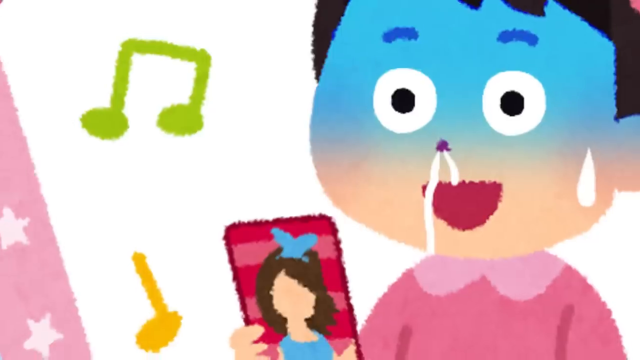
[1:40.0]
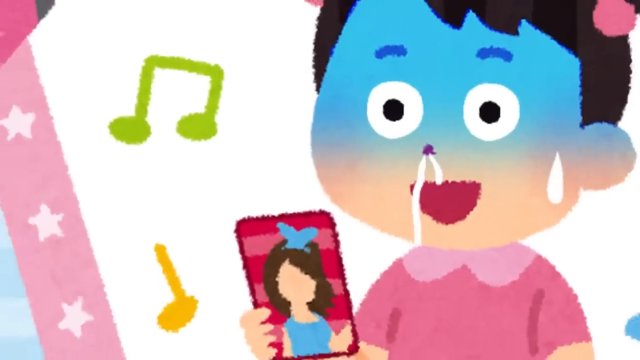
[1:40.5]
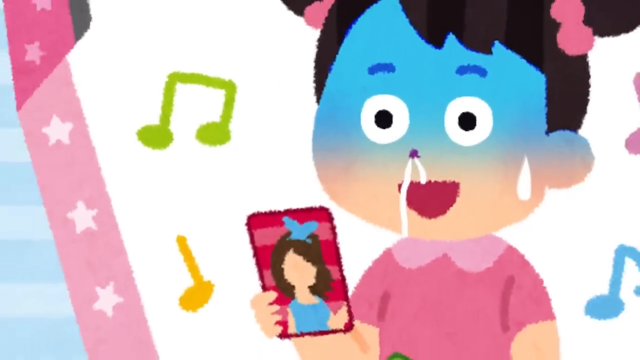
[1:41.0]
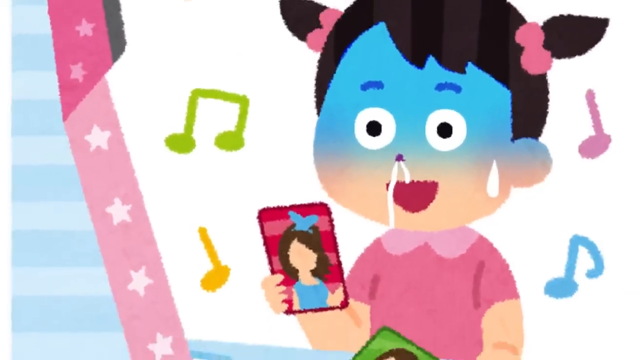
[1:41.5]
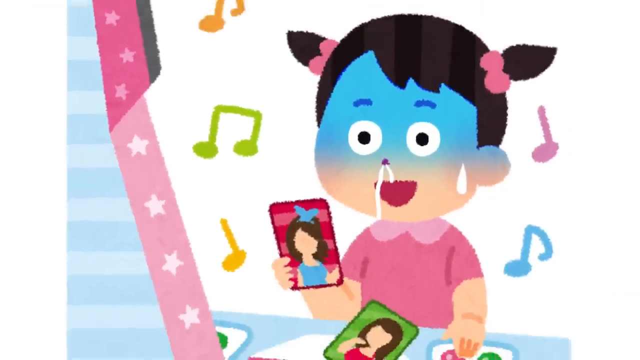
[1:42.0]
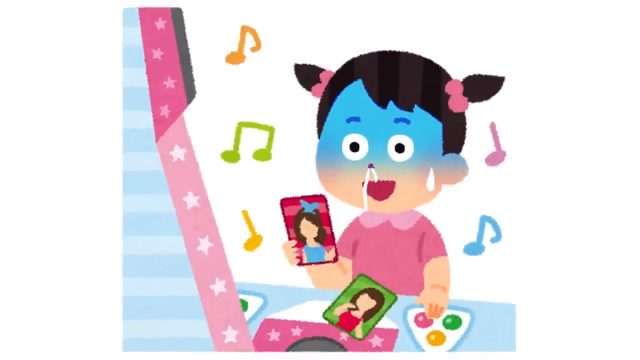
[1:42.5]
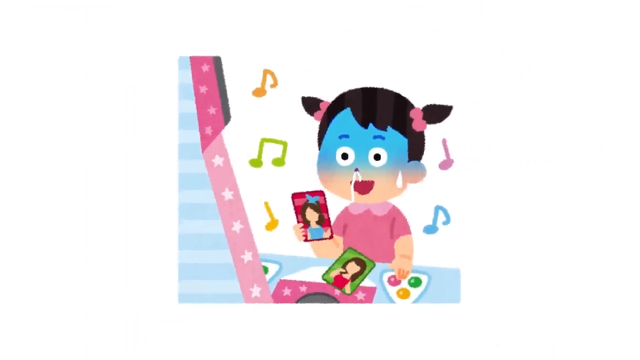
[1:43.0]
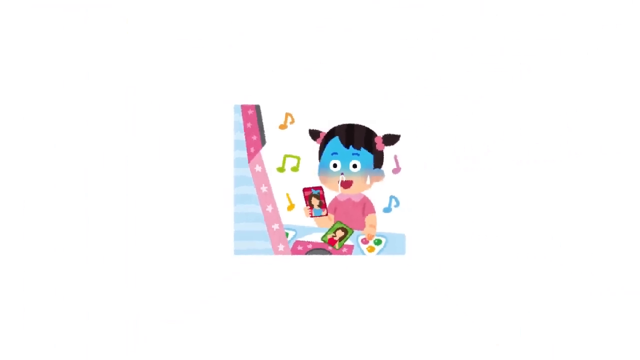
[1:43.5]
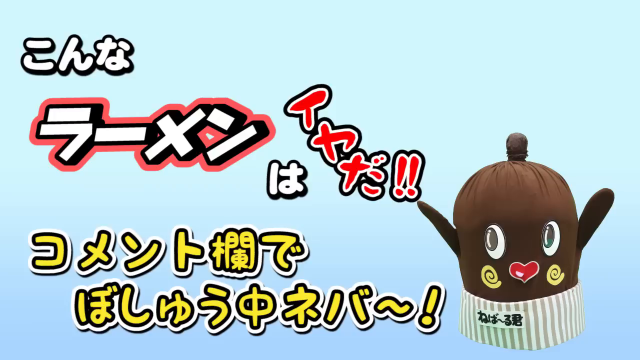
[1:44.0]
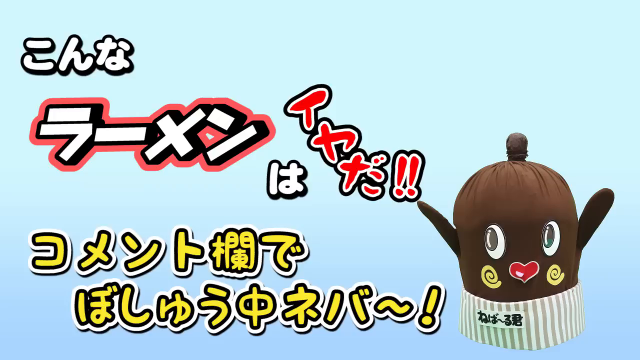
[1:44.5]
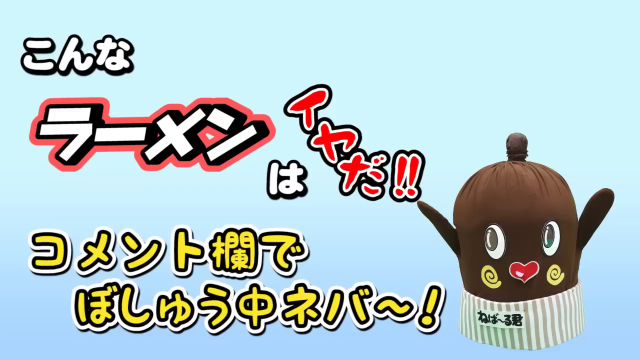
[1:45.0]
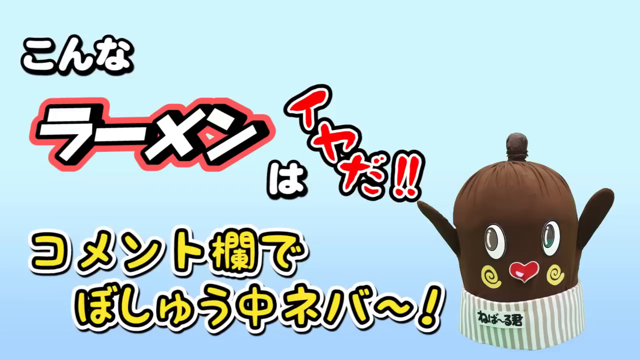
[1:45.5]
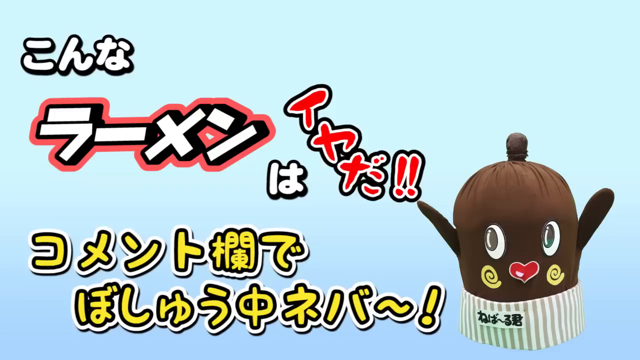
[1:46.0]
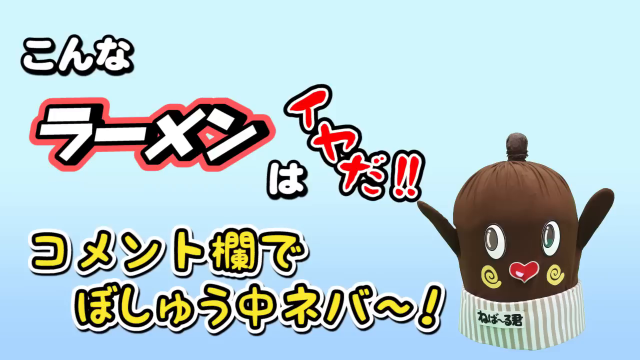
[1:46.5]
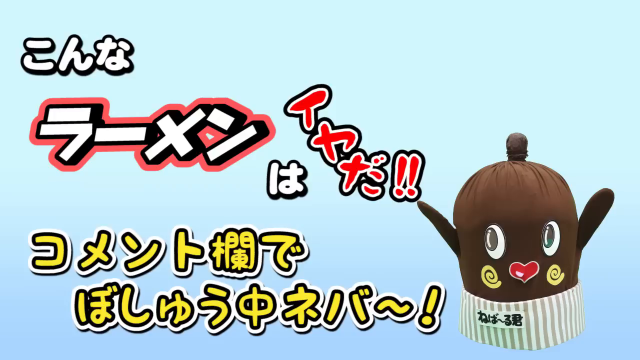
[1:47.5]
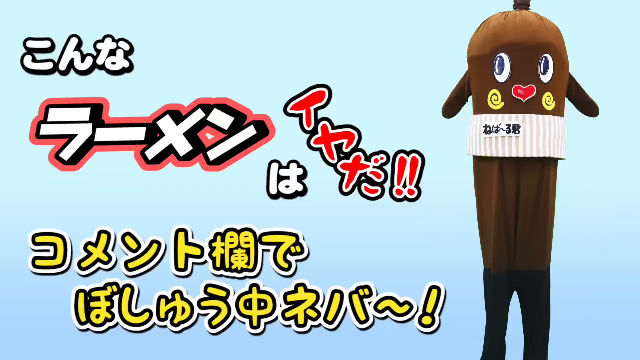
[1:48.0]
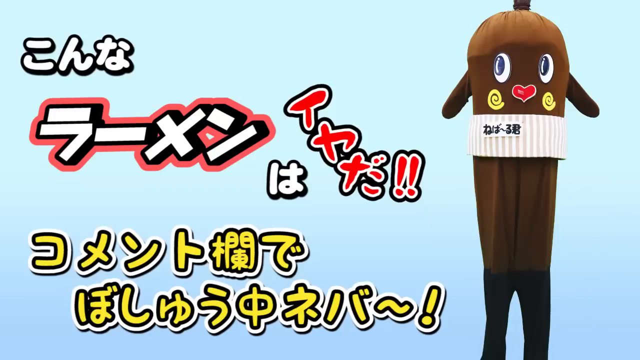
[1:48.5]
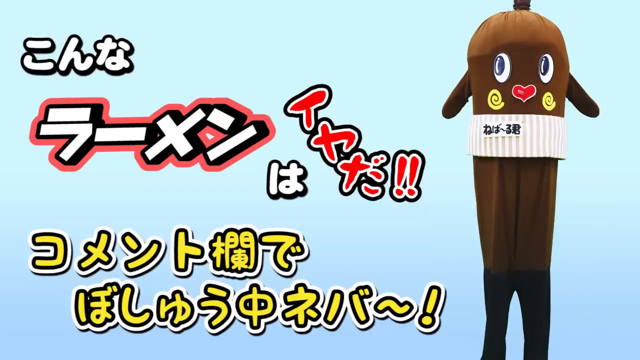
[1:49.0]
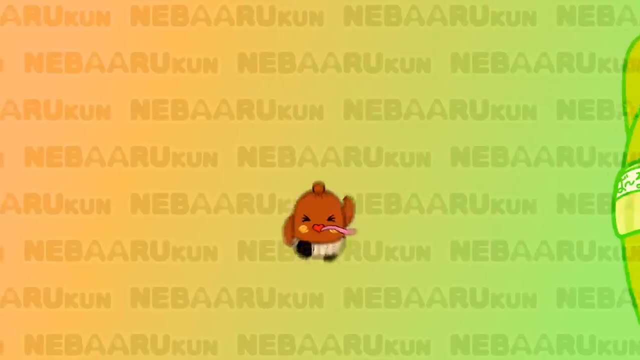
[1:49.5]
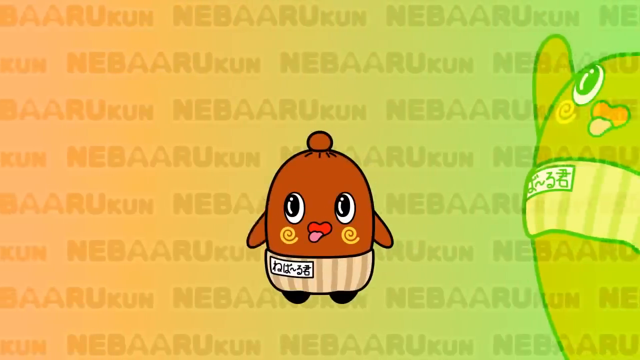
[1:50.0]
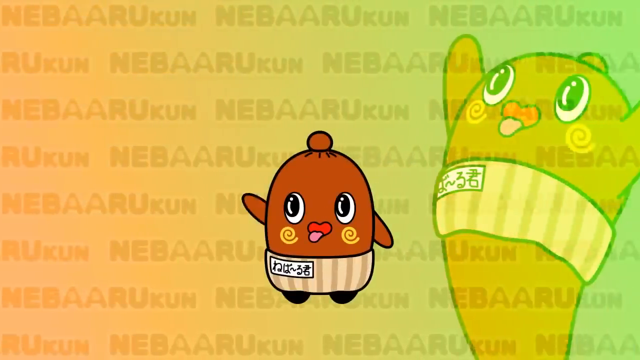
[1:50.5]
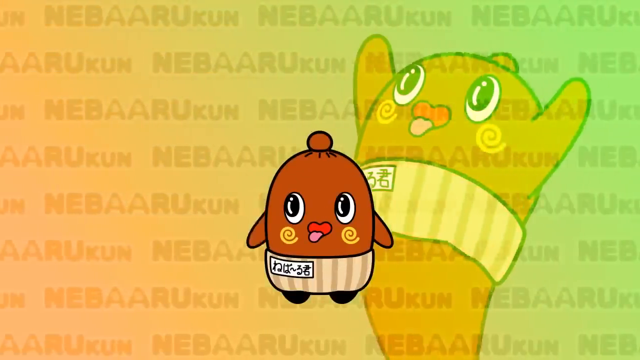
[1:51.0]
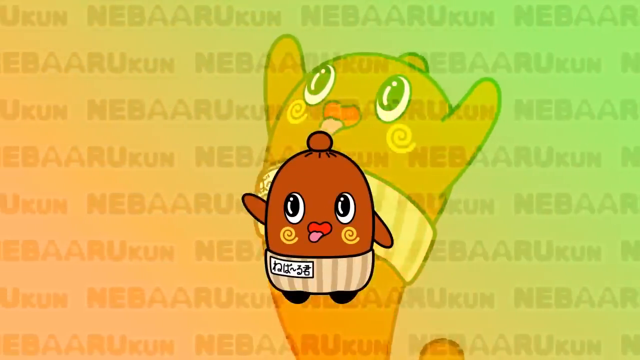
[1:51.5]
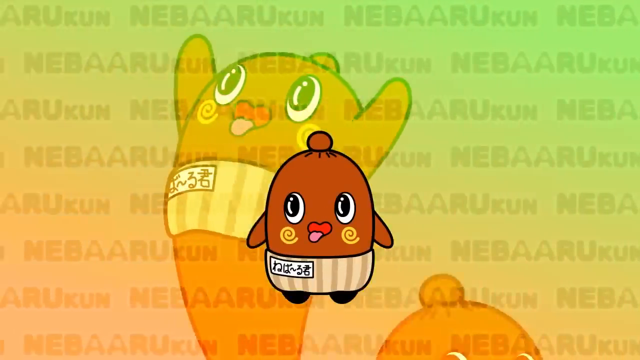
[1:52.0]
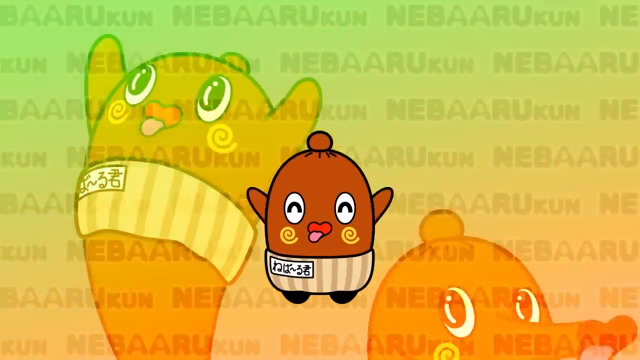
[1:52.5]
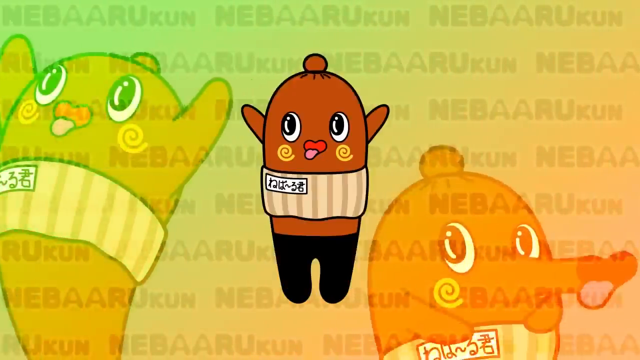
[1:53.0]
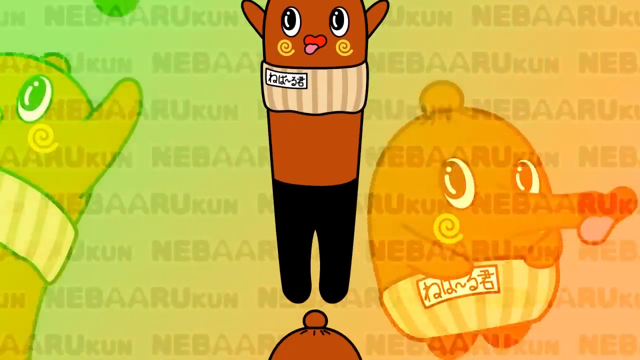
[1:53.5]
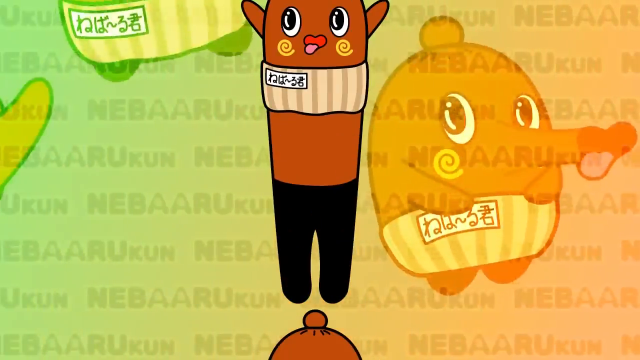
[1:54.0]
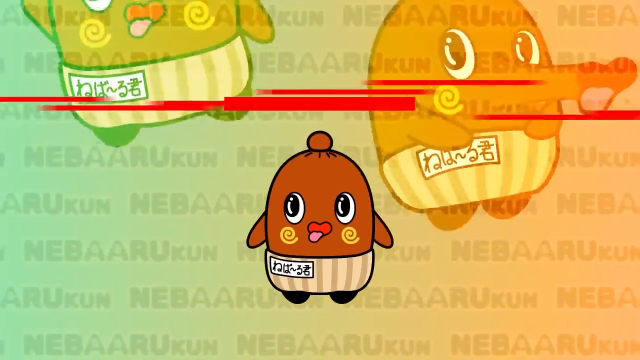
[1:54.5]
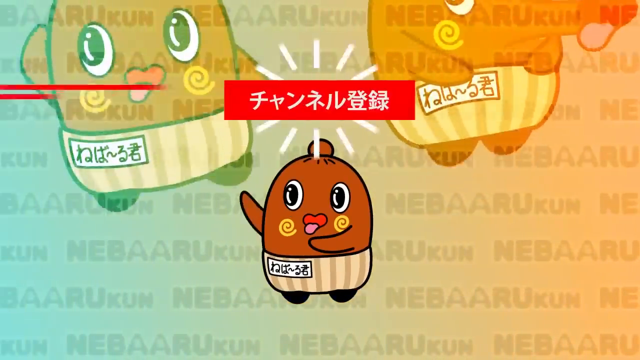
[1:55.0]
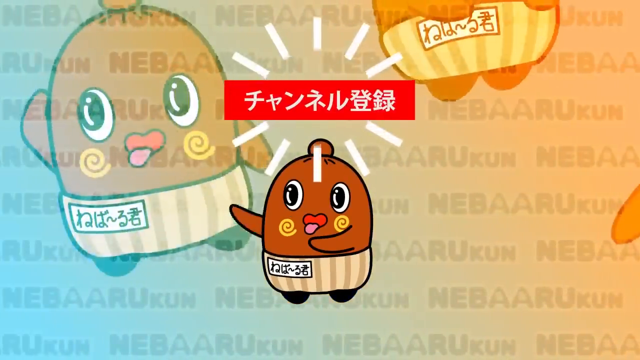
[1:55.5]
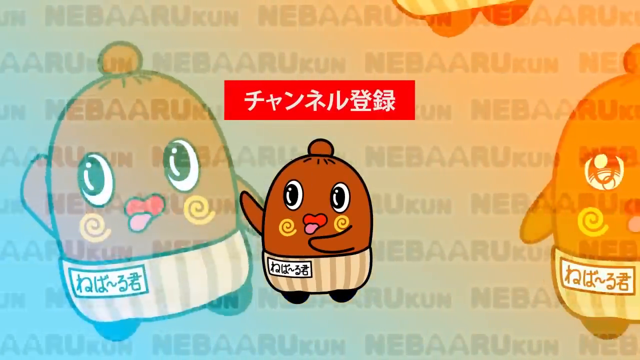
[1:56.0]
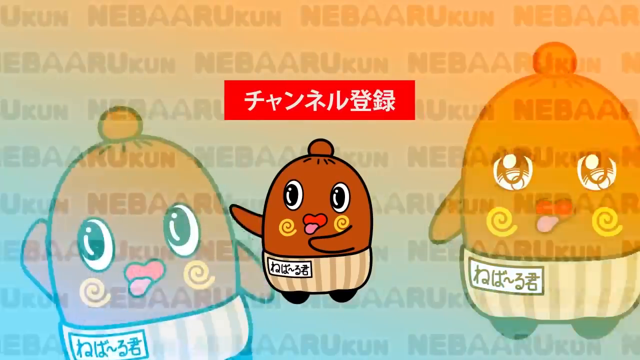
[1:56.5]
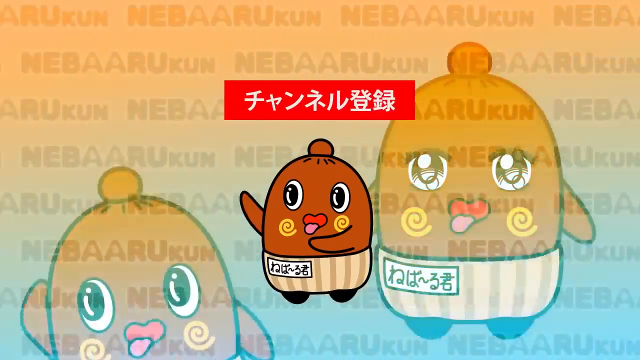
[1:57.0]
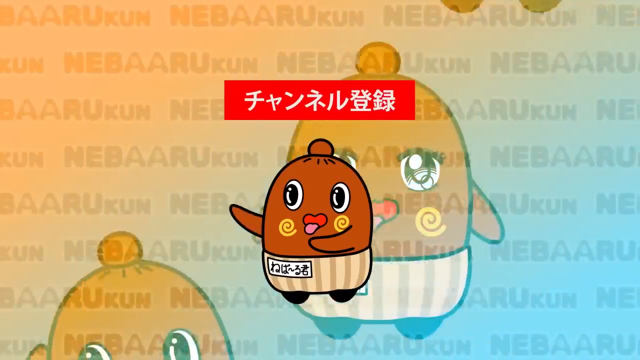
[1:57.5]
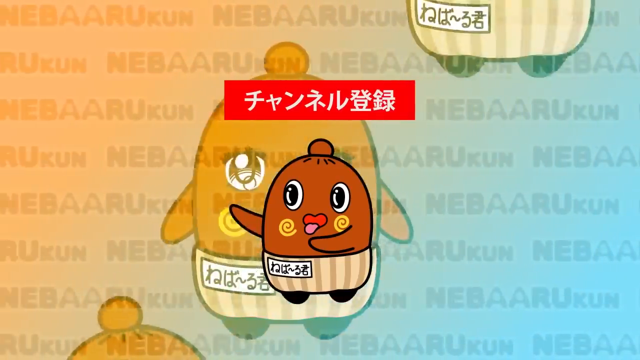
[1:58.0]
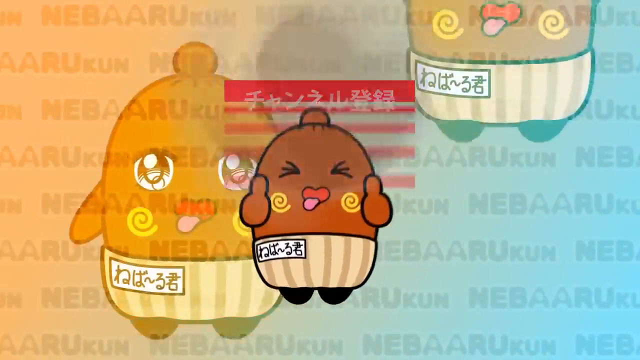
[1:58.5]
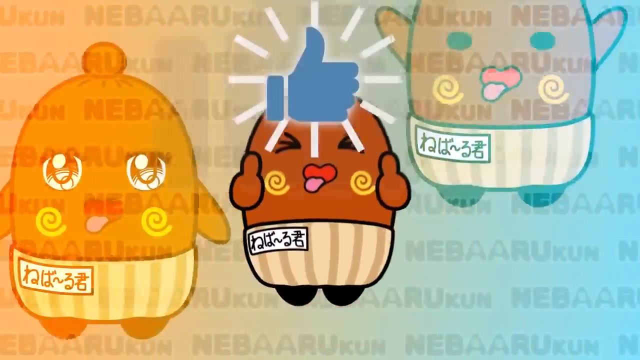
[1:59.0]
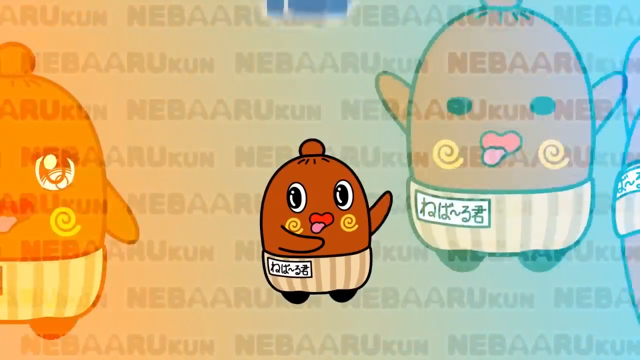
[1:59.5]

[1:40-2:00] On the right-hand side is what looks to be a hat of some sort featuring a brown character with its arms up, a knot on top of its head, a big heart-shaped red mouth, two white and black eyes, and two yellowish swirls for cheeks on either side of the mouth; around the bottom it appears to be a hat, with a gray and white hat band. This is on a light blue background with Japanese text, some of it outlined in red, some in red and some in yellow. Over an ombre background going roughly from orange to yellow to light green, a light gray watermark reading "NEBAARUKUN" repeats. The same character wanders forward, apparently wearing a white name tag with black Japanese text; it has two brown feet and two brown arms. On the right-hand side is what looks like a hat of this character with one brown arm raised. In the middle, the character gestures with its mouth open and tongue sticking out, beneath a red text box with white Japanese text, while images of it making faces appear in the background, one on the left and one on the right. It begins to wave as the background changes to light aqua and orange, with the same character in a couple of different poses in the background.